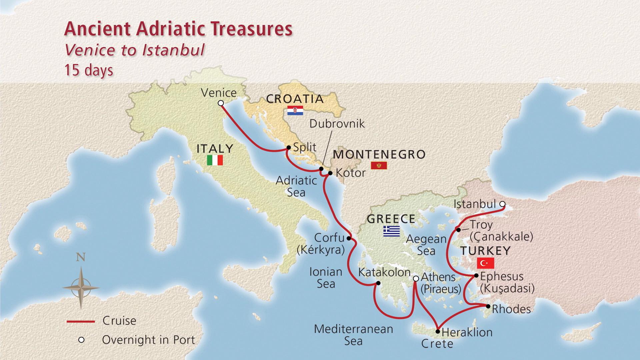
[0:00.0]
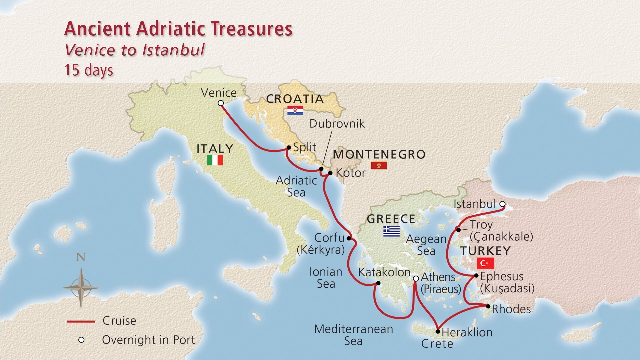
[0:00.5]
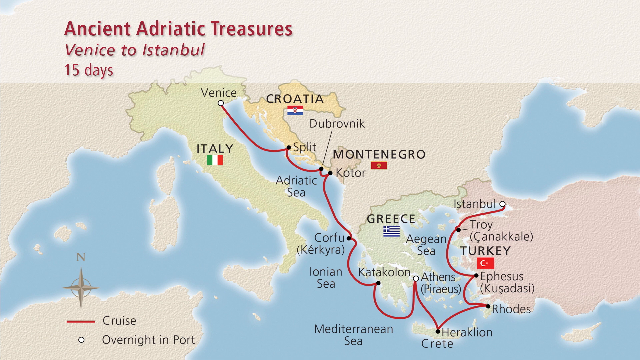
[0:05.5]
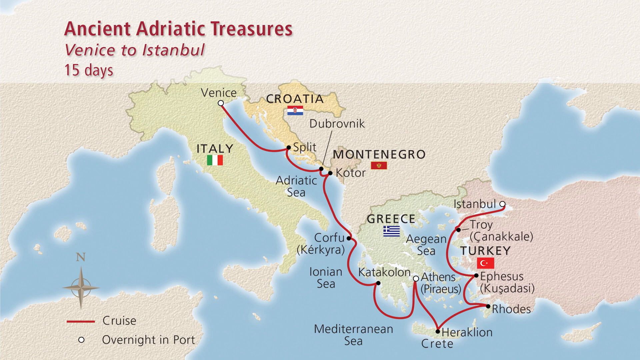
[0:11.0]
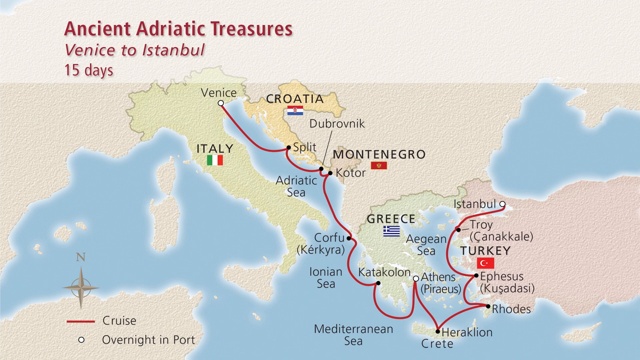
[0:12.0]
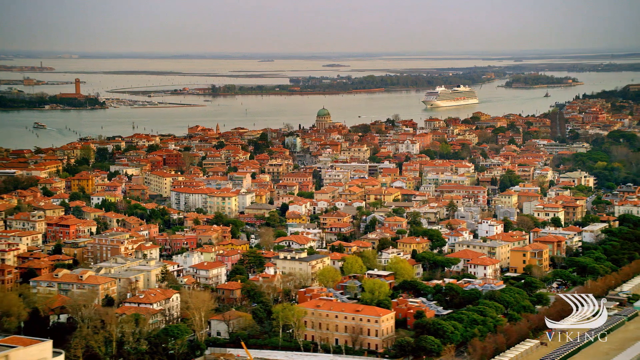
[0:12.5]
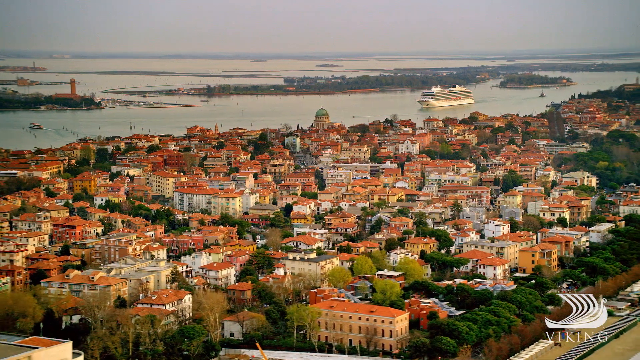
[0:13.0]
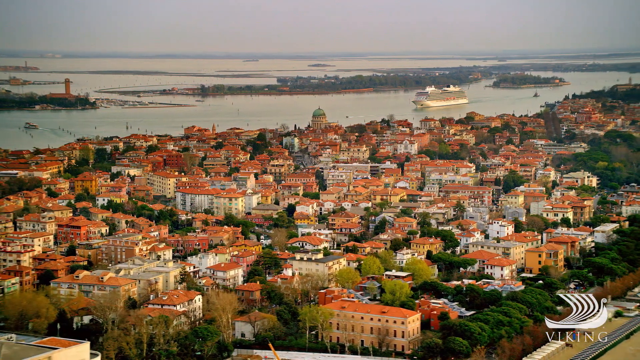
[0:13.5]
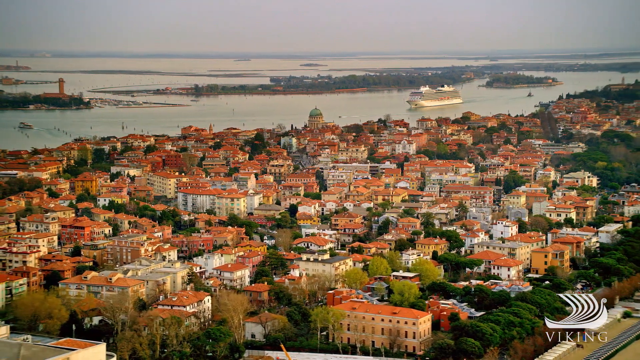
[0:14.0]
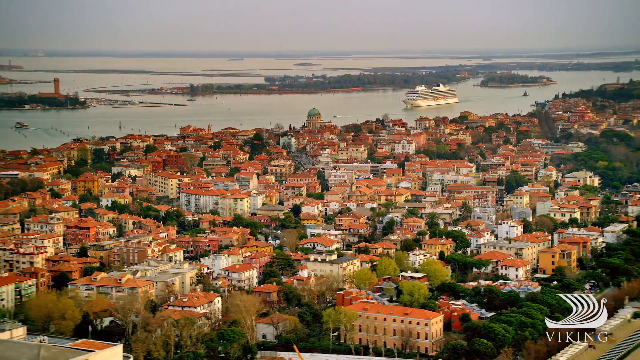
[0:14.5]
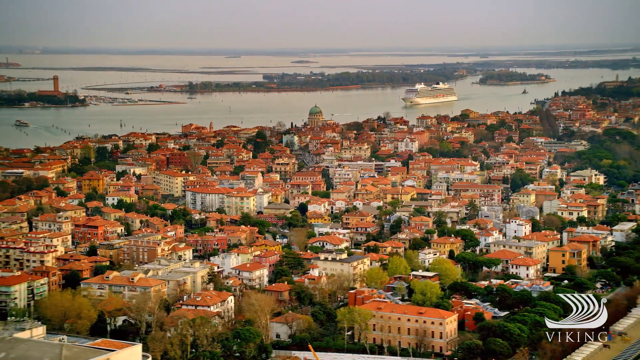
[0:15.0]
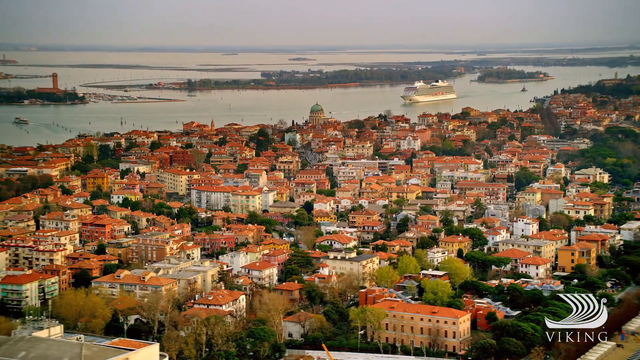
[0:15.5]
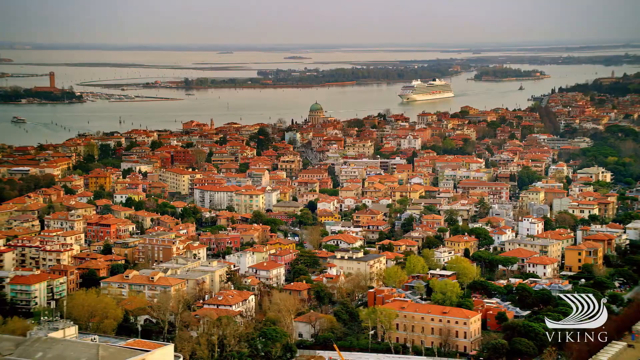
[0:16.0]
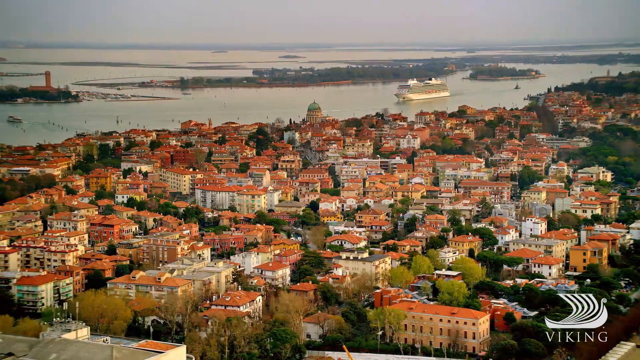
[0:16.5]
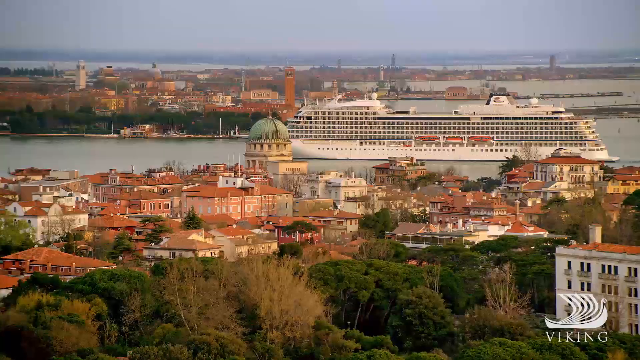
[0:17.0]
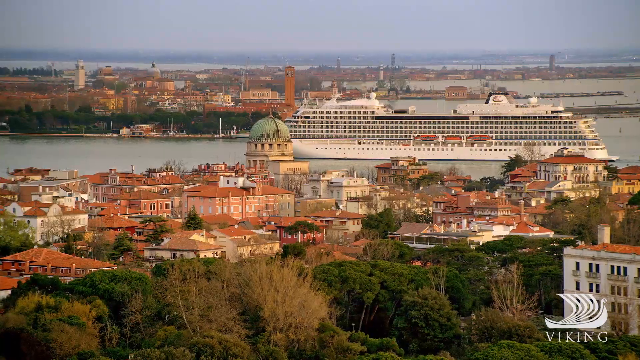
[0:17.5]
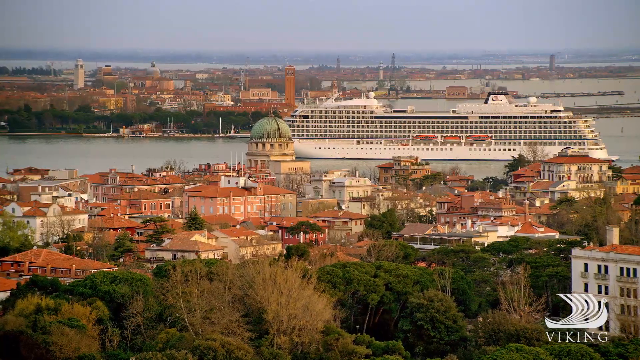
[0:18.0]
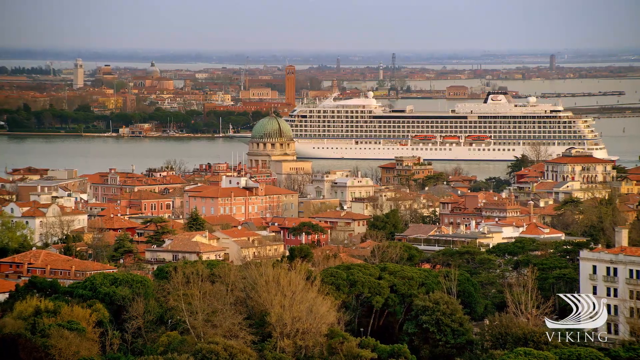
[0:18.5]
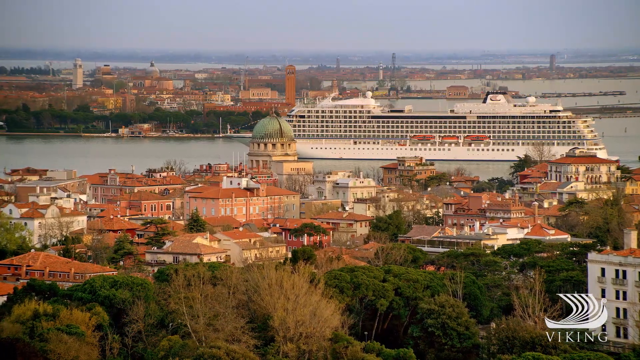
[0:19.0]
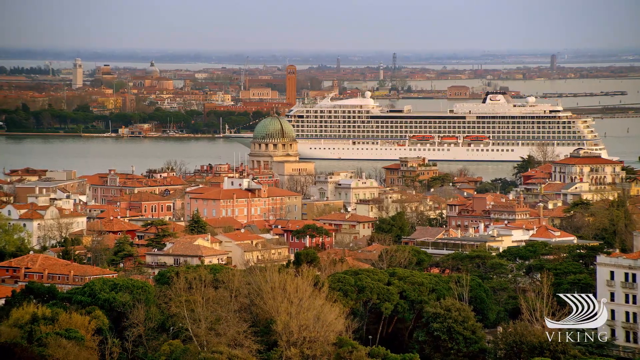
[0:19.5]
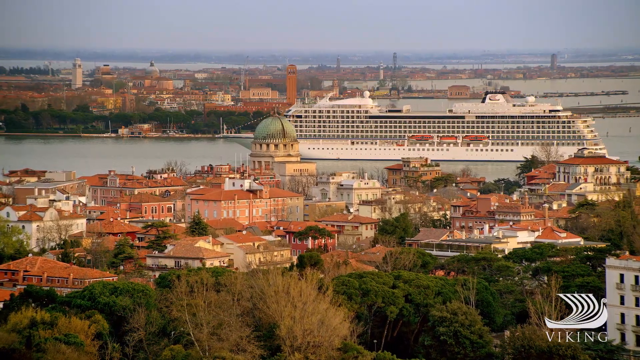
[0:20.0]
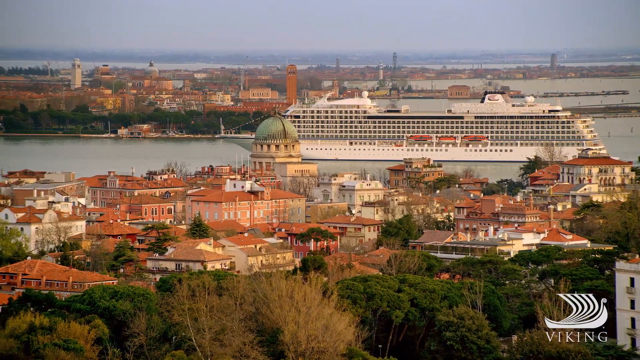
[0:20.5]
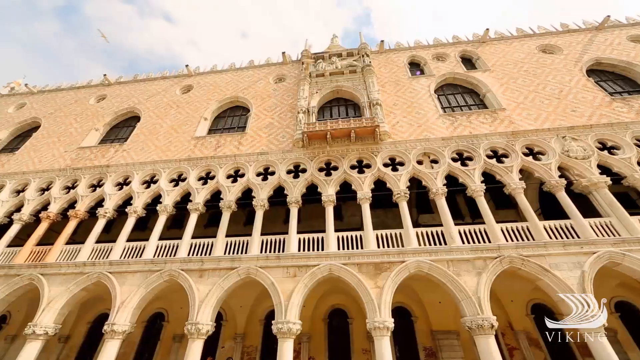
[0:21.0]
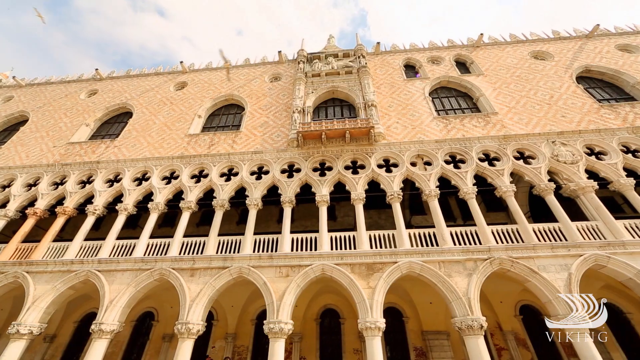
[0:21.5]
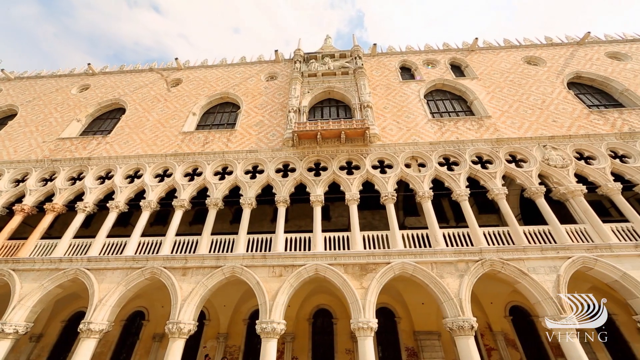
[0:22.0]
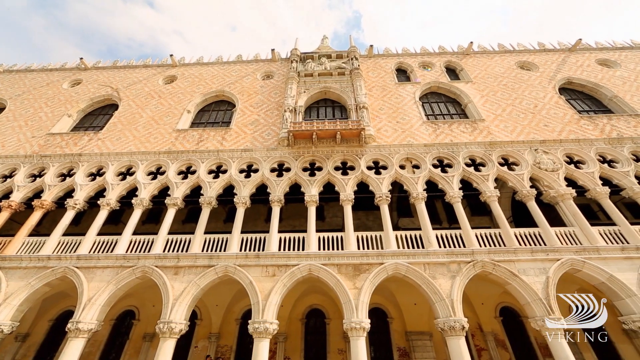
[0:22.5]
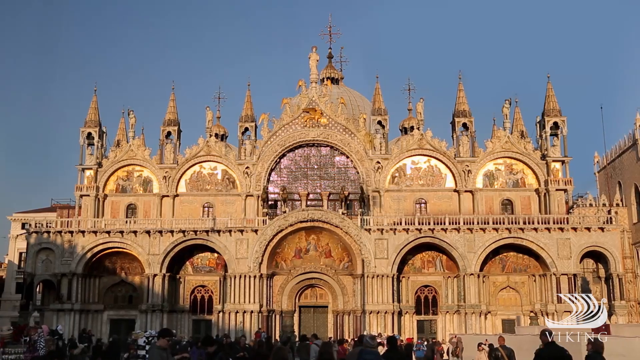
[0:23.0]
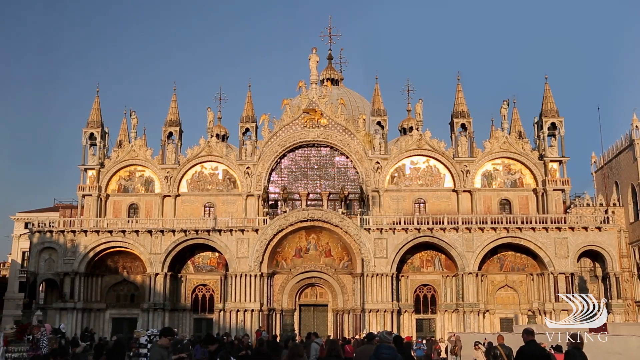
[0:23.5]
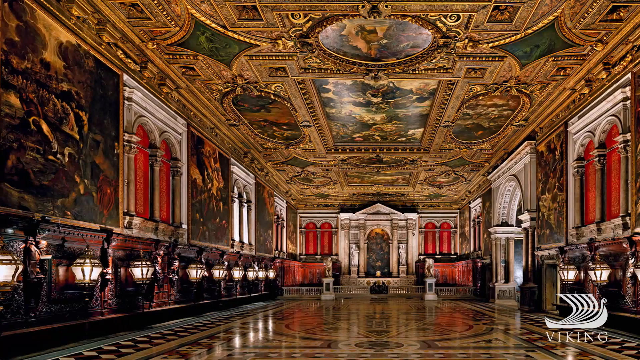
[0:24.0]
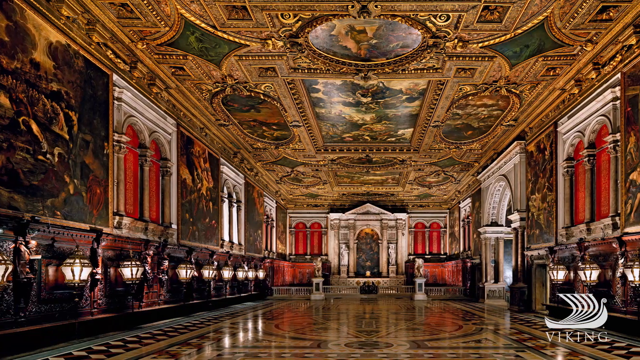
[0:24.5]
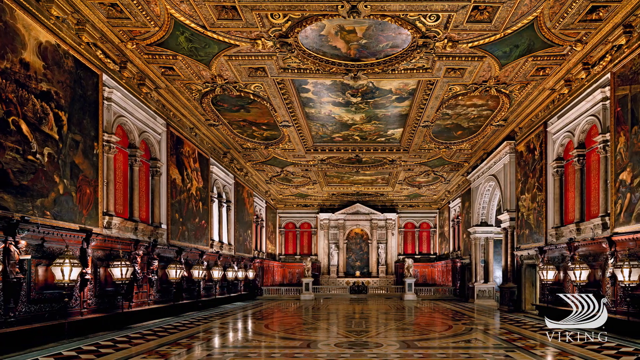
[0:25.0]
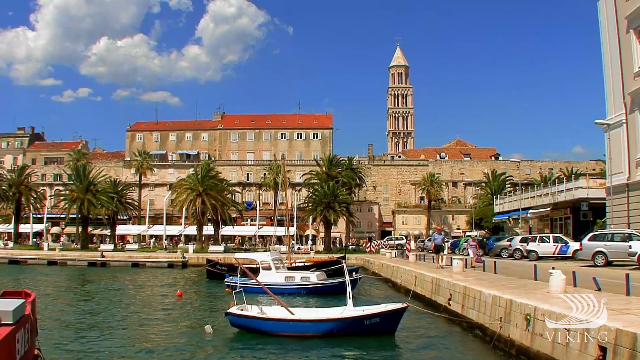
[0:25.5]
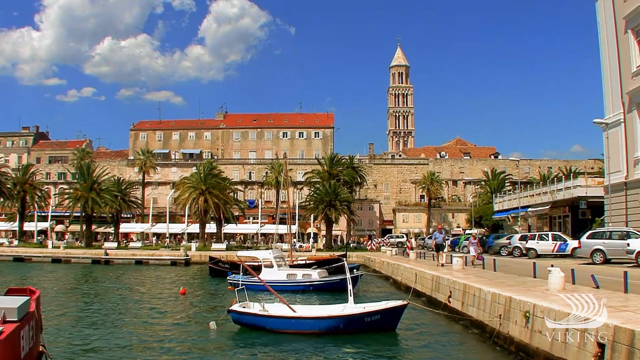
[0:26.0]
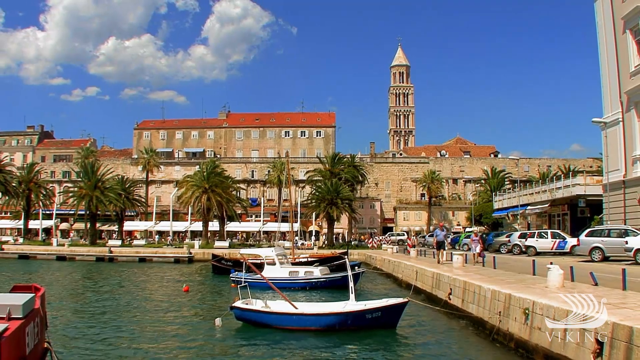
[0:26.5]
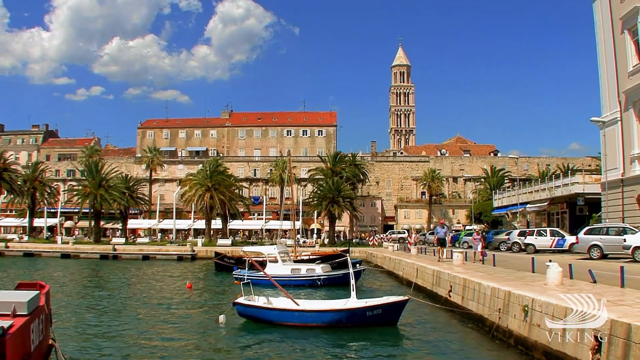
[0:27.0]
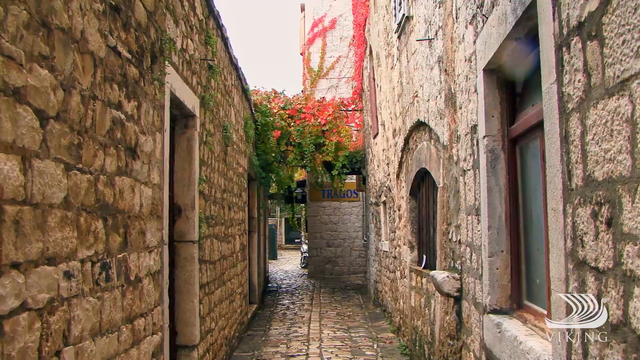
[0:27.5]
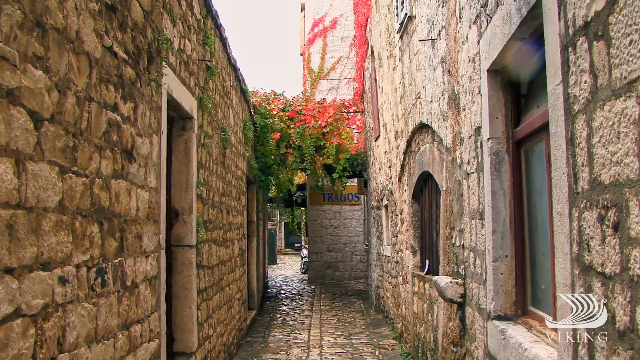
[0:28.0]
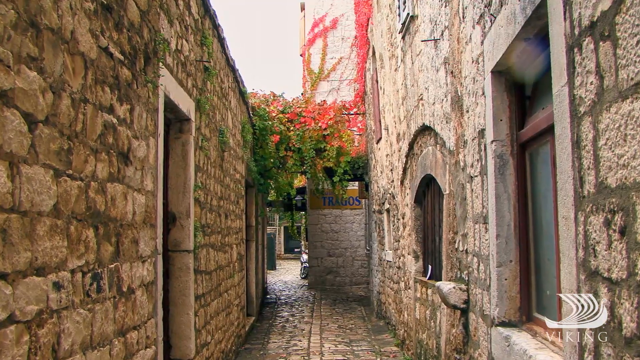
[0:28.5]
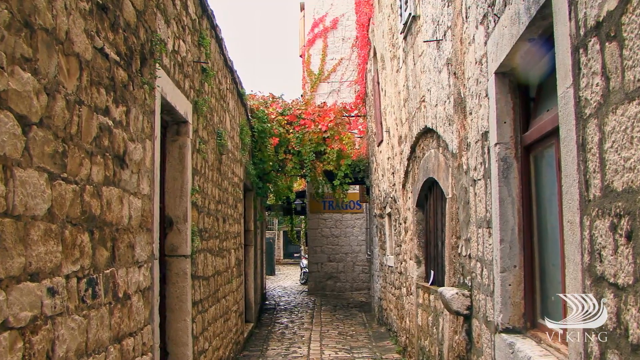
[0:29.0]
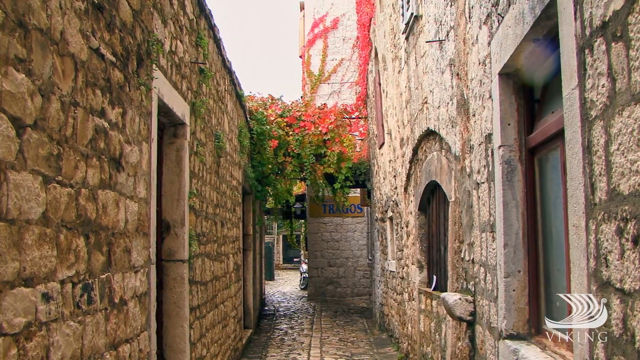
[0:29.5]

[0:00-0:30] A travel itinerary, possibly for a cruise, opens with a map. In the upper left, red text reads "Ancient Adriatic Treasures", with smaller text underneath reading "Venice to Istanbul" and below that "15 days". The map shows Italy, Croatia, Montenegro, Greece and Turkey, with blue water and pale yellows, greens and pinks distinguishing the different countries; the different seas are labeled in the lower part of the map. Cities and places are labeled, and small flags appear under the country names. A red dot and line appear to start in Venice, then move to Split, Croatia, and Kotor, Montenegro, then seem to make three stops around Greece ending in Athens, go down to Crete, and go up to three stops in Turkey ending in Istanbul. An aerial view follows of a coastal city with many red roofs and white buildings, with a cruise ship in the background, then a side view of the very large white ship coming into the harbor. A couple of quick shots show building exteriors with what looks like Turkish architecture, followed by a very ornate interior, possibly a palace, with lots of gold and some red accents. The view then switches to an exterior of a harbor with a small tower in the background, and then to a stone alley with stone buildings on either side.